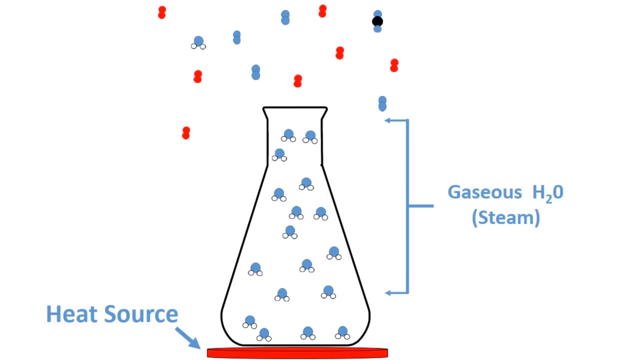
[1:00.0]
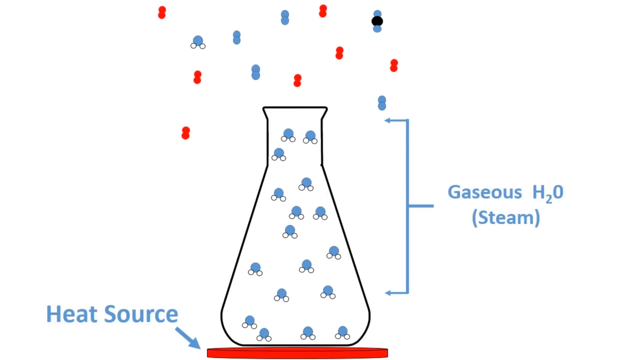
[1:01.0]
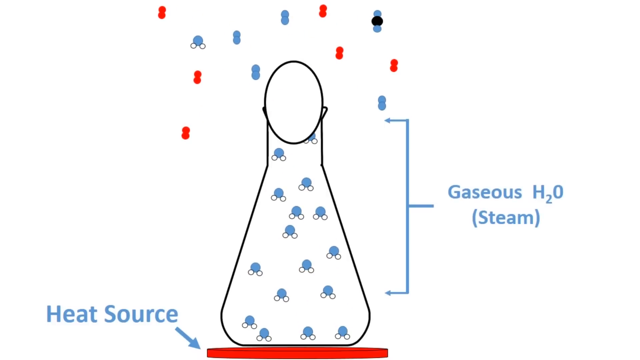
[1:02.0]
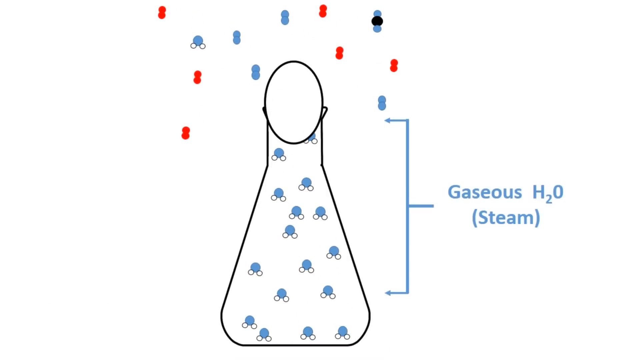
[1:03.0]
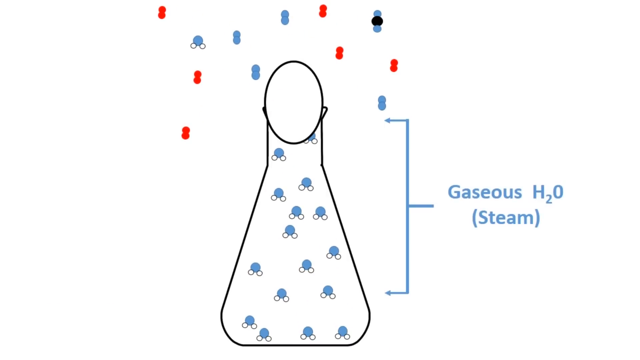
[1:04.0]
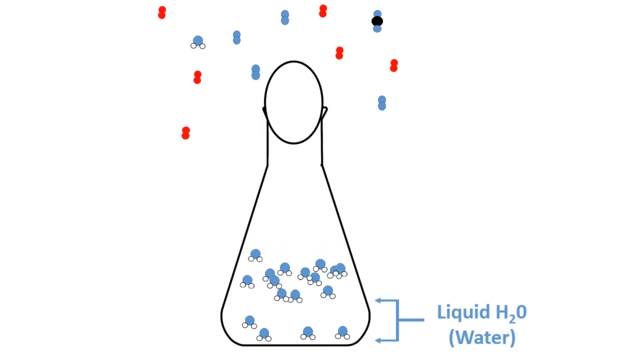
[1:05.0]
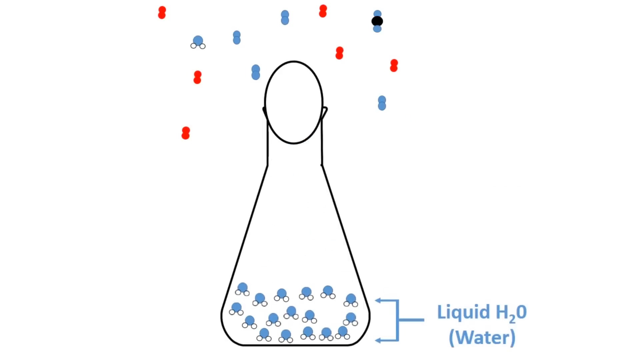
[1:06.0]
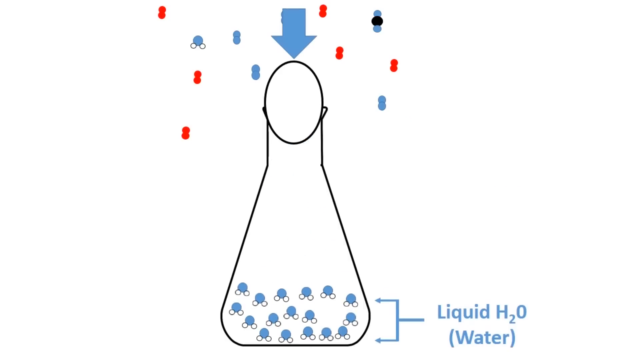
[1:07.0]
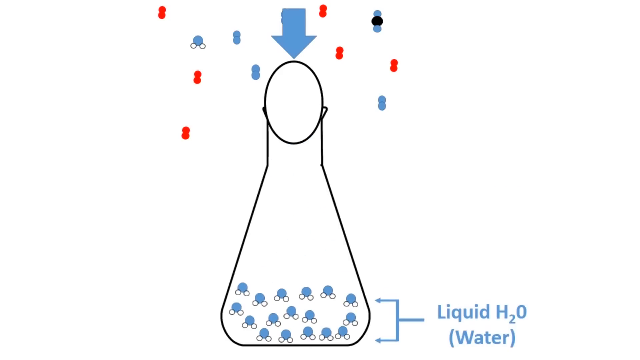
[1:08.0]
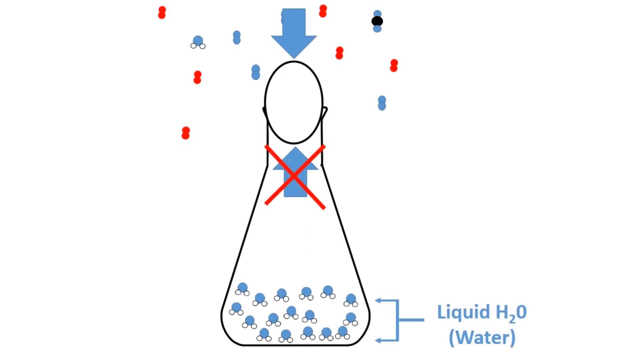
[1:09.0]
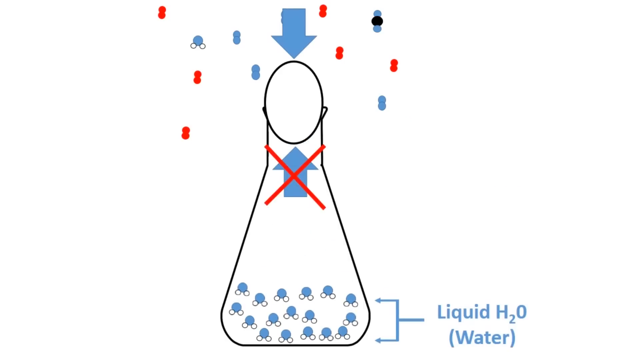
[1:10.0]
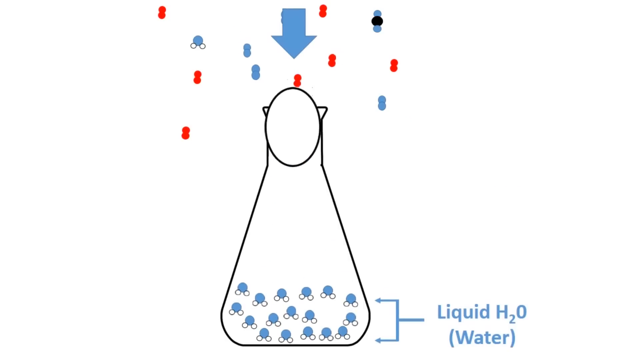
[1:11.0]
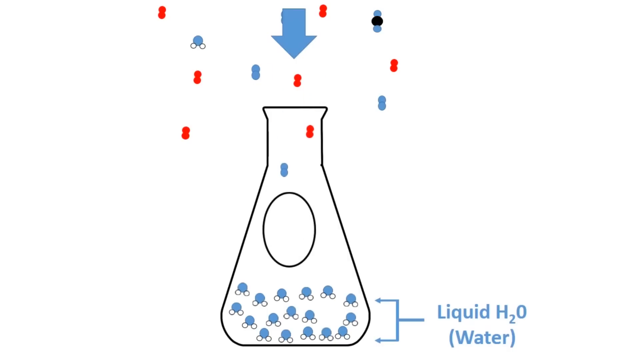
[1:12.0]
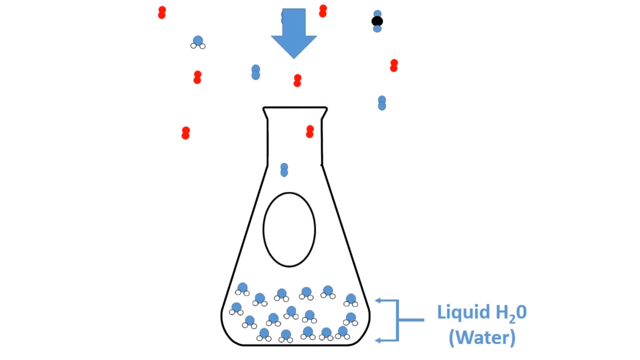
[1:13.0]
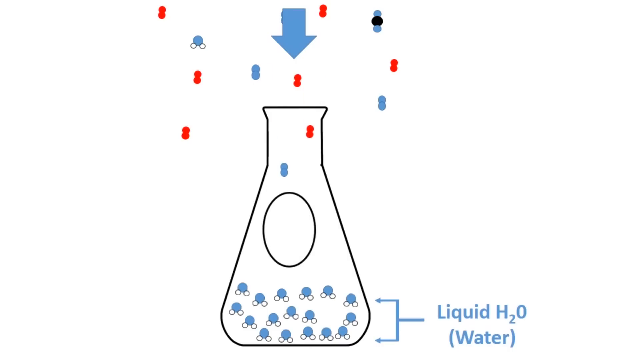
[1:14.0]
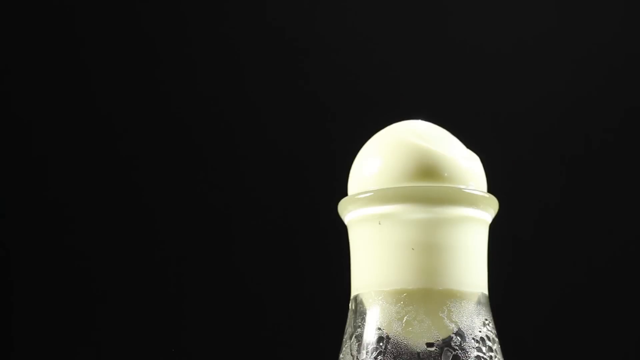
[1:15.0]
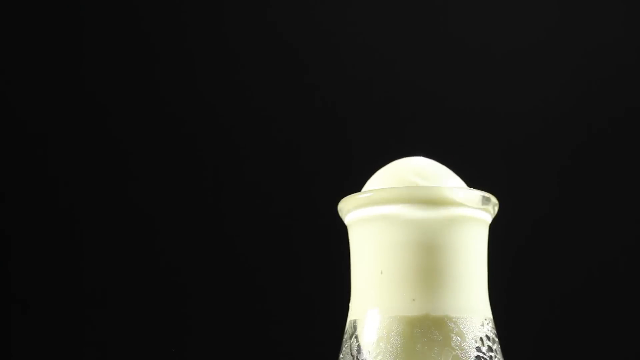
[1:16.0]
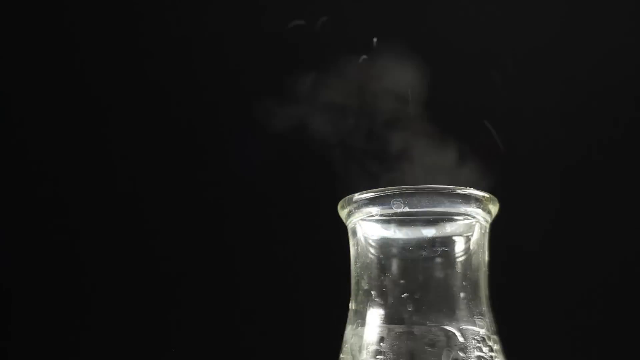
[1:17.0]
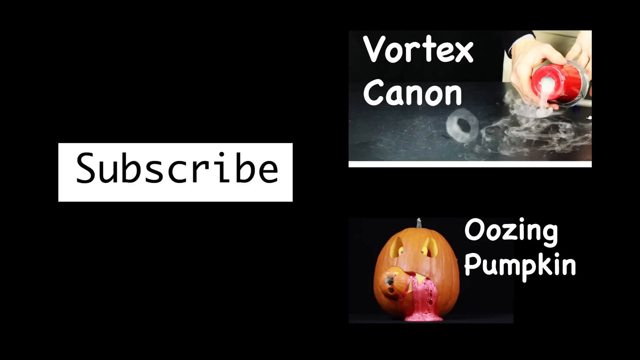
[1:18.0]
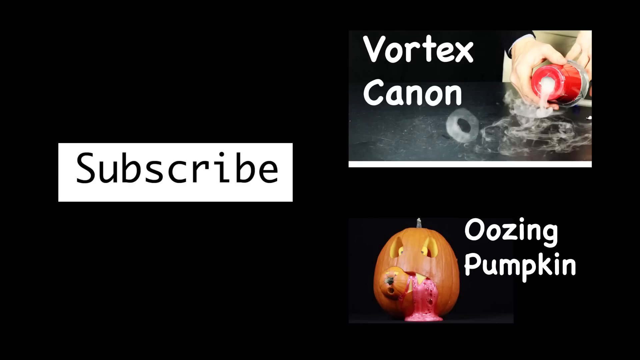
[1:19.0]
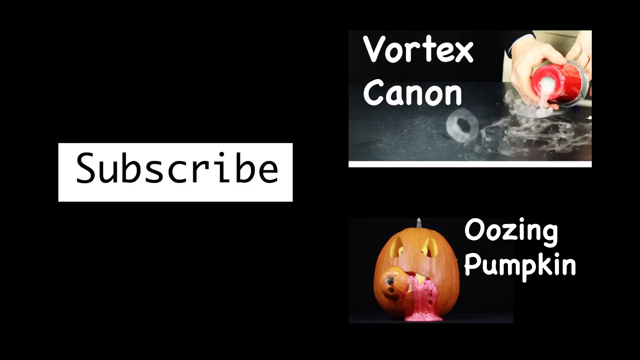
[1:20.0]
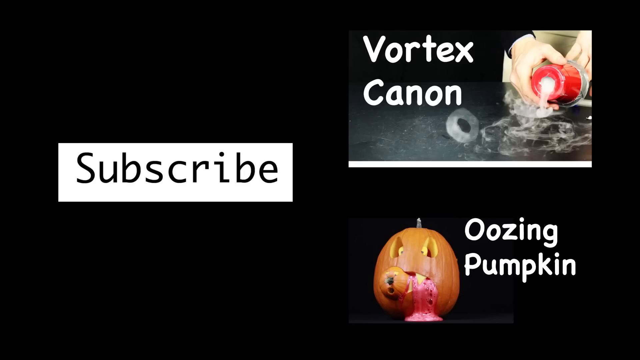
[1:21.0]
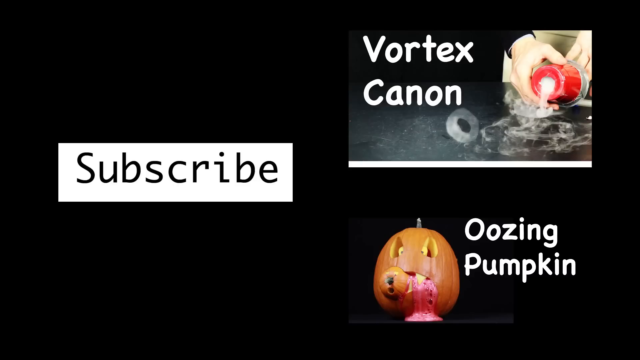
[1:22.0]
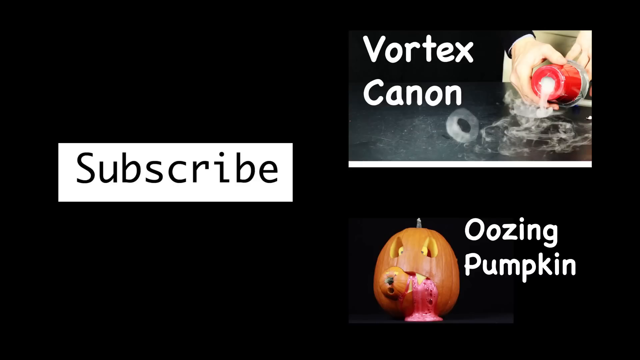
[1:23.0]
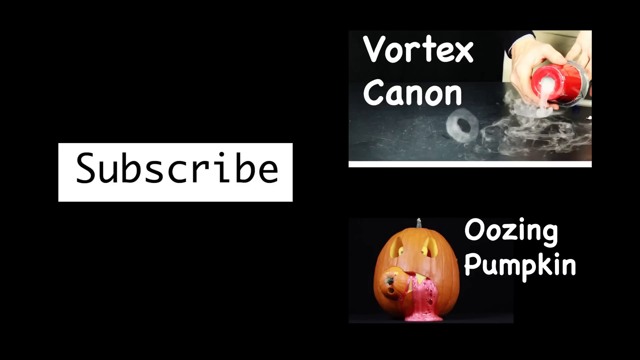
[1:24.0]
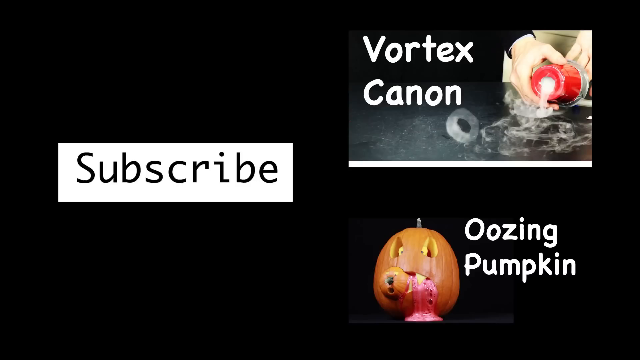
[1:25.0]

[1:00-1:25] A line illustration shows the beaker, narrower at the top and widening at the bottom, with the egg indicated at its top. Blue dots drawn through the beaker indicate the liquid water, and above it, in red and blue, are the gases escaping. At the bottom right, an arrow points with the label "liquid H2O water". The heat source is illustrated as a red plate underneath the beaker, and a blue arrow at the top indicates the direction the egg moves as it slips through the neck. The video then changes to real footage of that moment: the egg is poised at the opening of the beaker, suddenly grows thinner, and collapses into the beaker. At the end of the video, a new screen pops up. On the right-hand side, a white box with black ink says "subscribe". At the upper right is an illustration of a man's hands holding a red object from which steam pours out, with the words "Vortex Cannon". At the bottom, "oozing pumpkin" is written in white beside an illustration of a jack-o'-lantern with carved eyes and a mouth, with something coming out of the mouth.